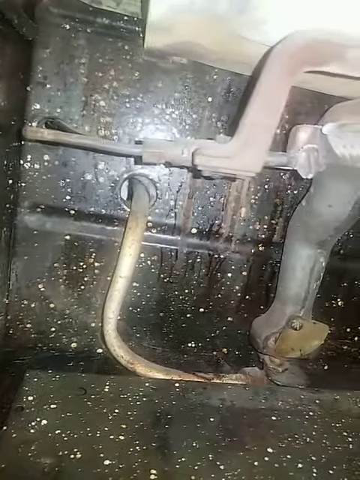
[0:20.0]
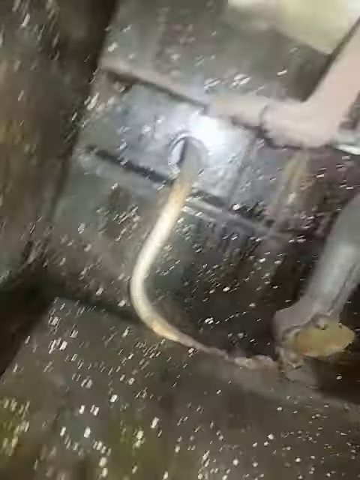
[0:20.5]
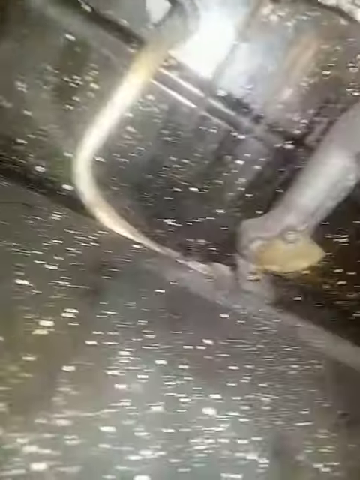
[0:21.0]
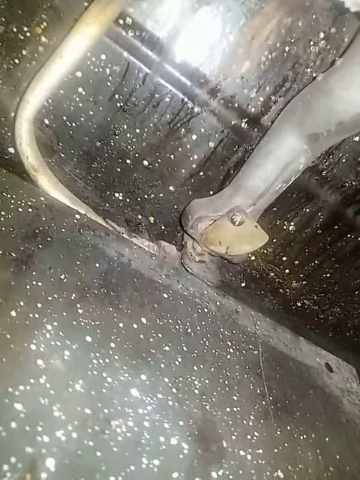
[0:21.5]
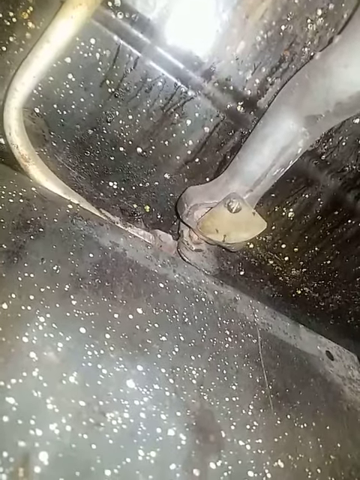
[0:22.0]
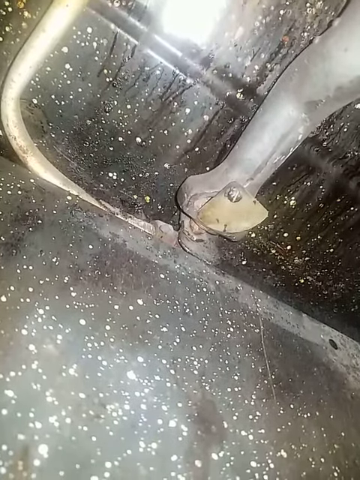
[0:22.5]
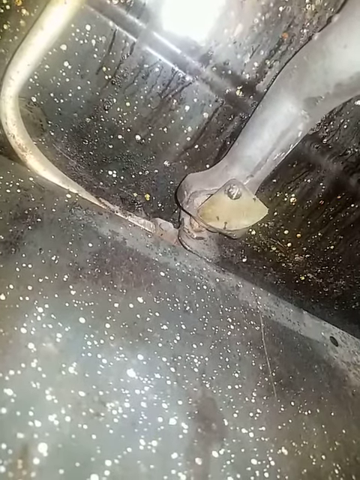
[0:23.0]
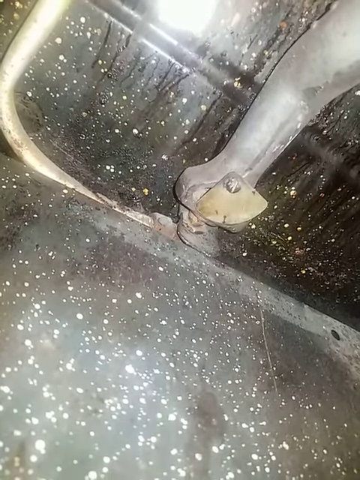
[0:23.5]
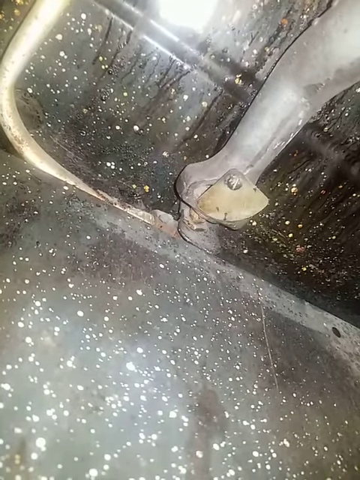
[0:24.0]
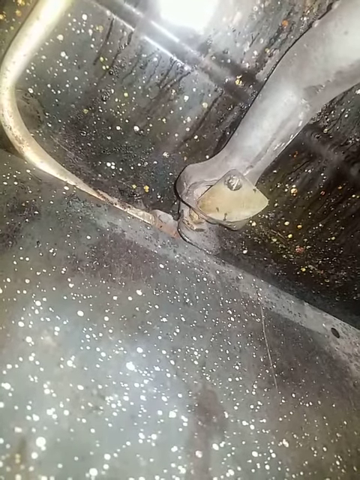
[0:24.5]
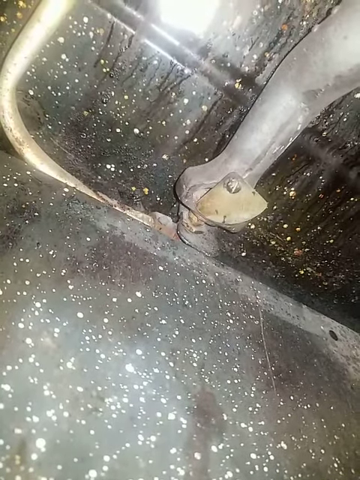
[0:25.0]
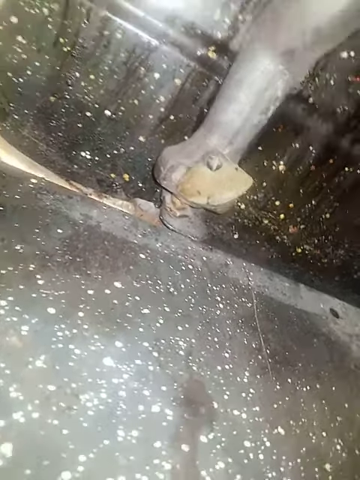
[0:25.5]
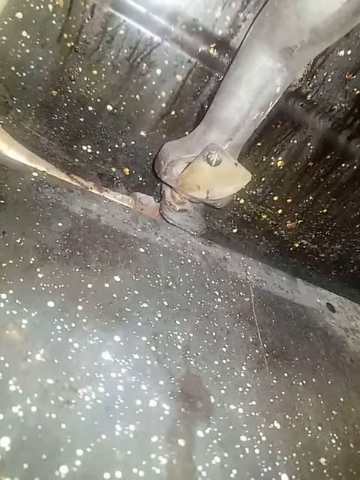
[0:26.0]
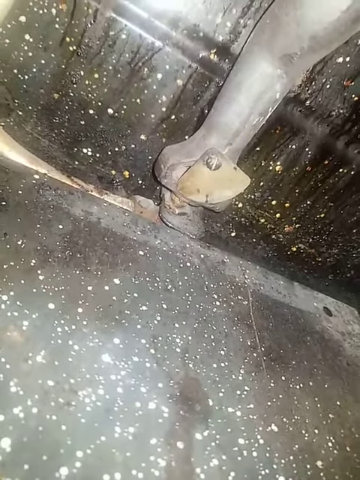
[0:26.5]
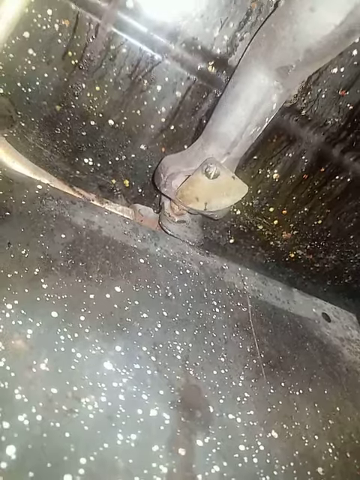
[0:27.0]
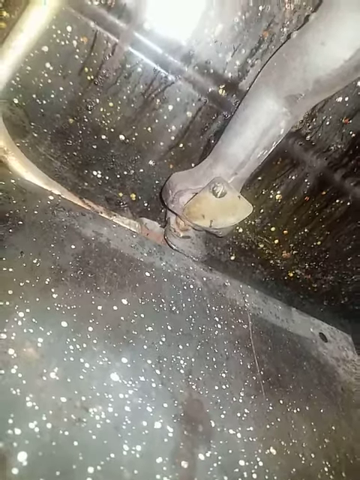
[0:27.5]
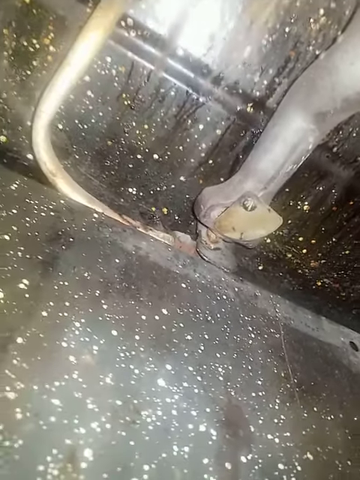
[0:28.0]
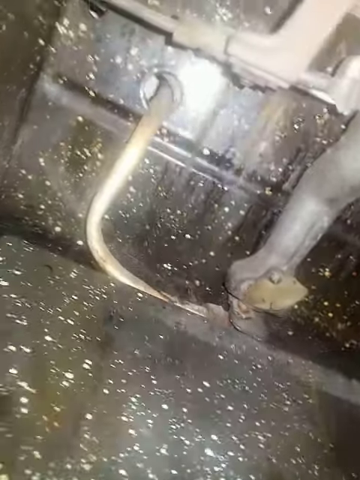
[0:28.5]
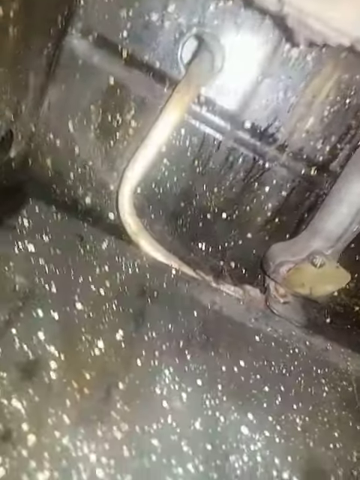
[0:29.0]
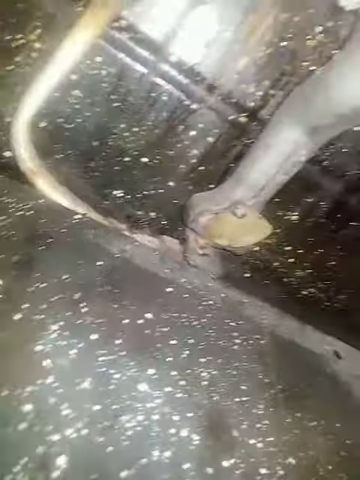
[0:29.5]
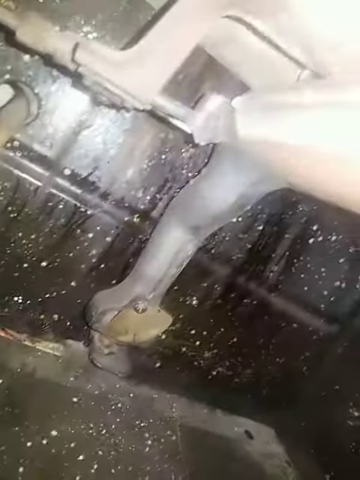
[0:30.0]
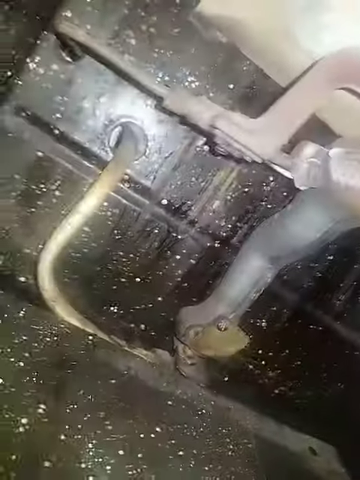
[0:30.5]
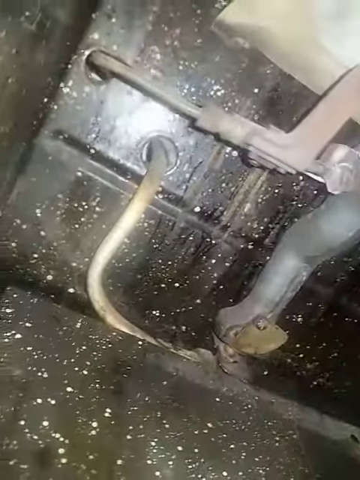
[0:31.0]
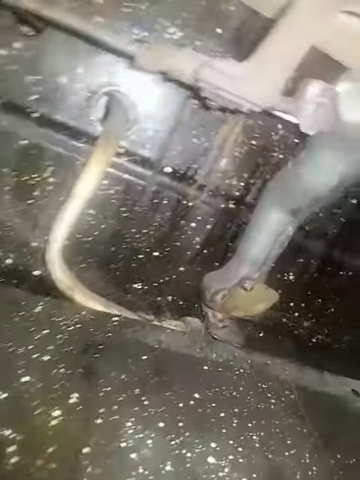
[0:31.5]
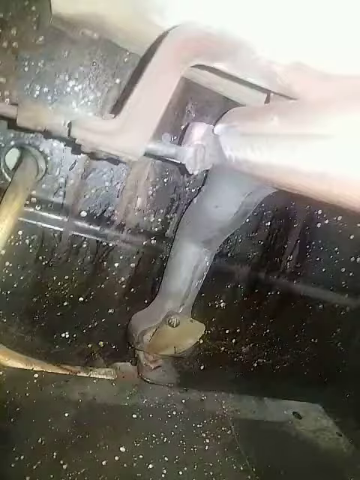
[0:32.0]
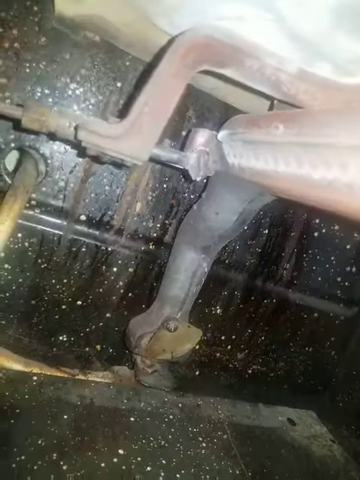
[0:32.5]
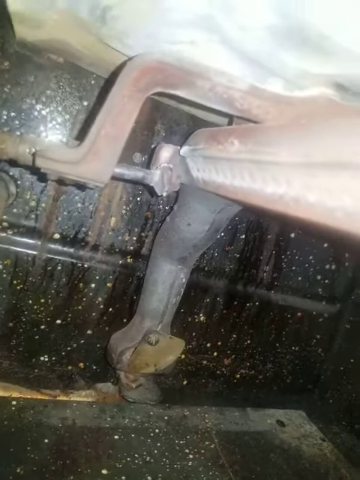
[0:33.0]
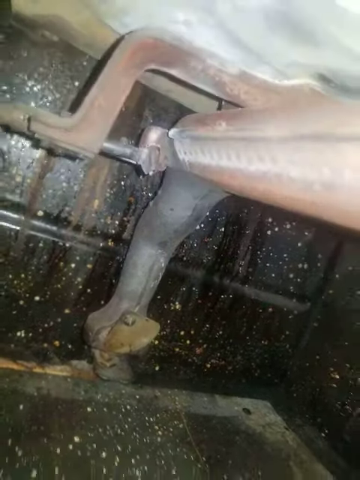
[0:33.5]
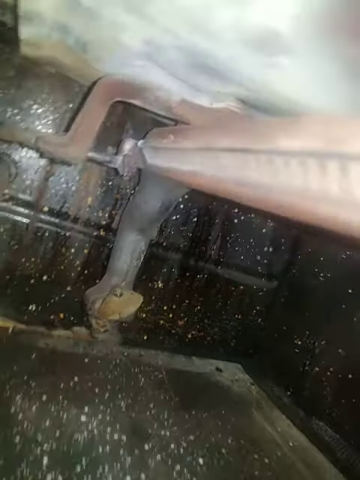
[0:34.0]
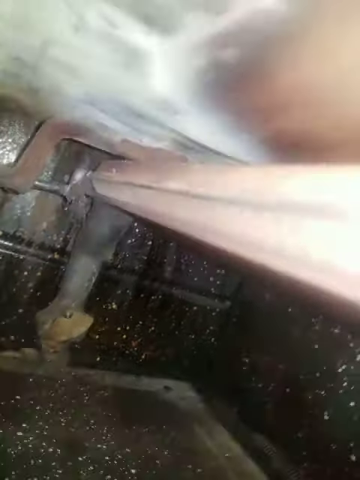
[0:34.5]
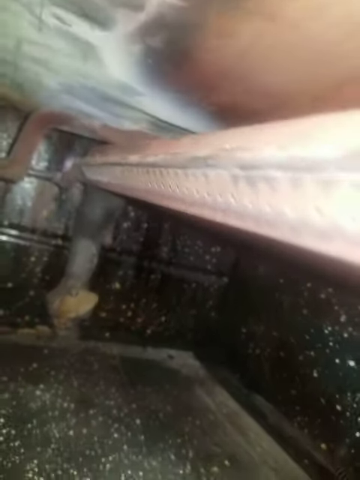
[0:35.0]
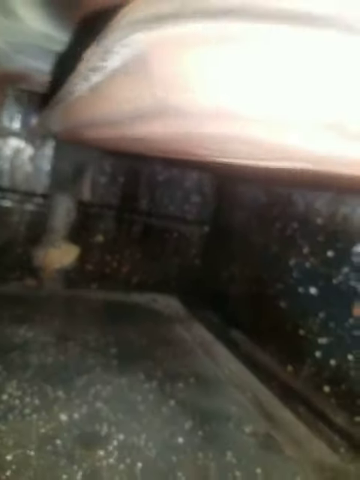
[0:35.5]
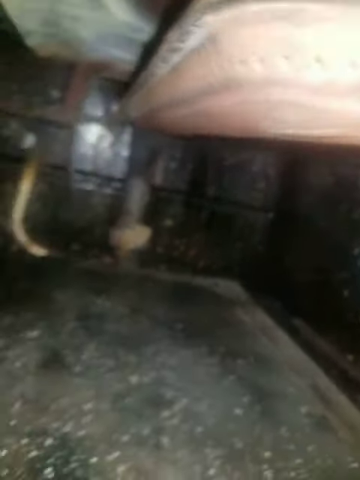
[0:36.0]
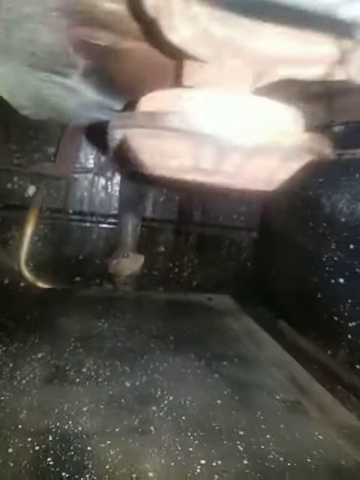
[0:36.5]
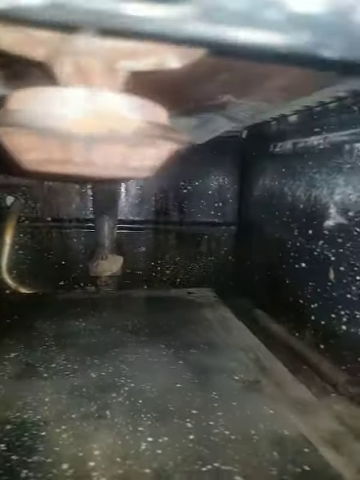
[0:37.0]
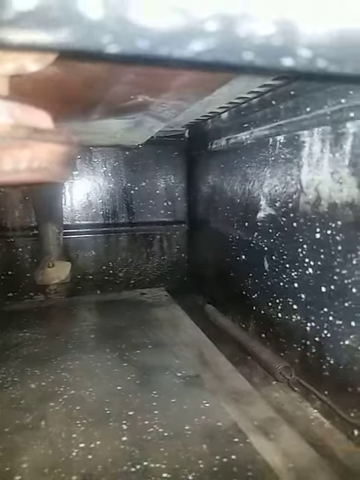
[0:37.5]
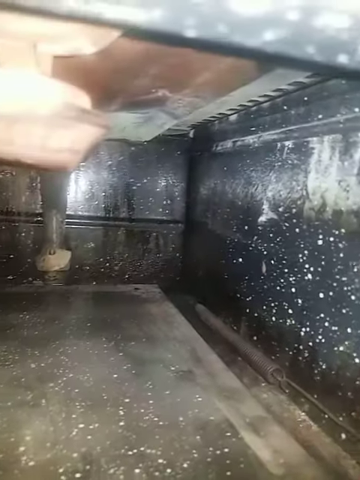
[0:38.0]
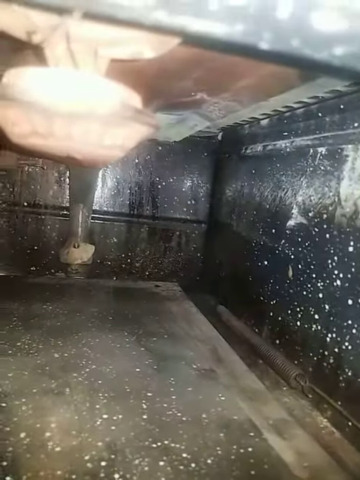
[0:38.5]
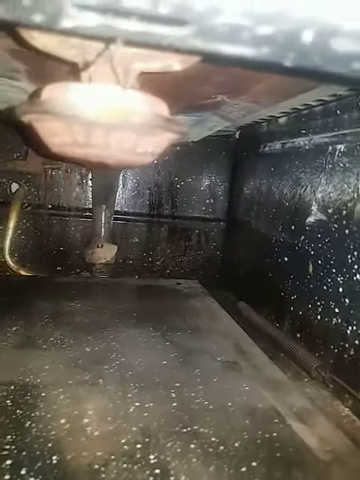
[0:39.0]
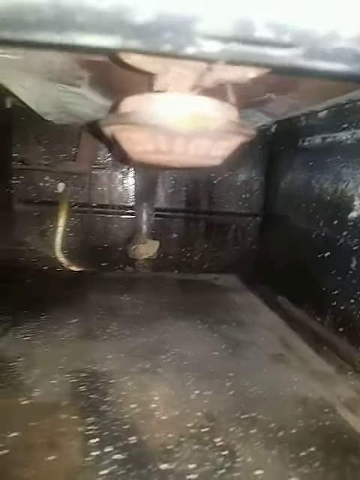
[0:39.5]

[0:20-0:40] The camera focuses on a specific part inside the oven-like or stove-like device. This piece has a screw on it, and a tube or pipe goes into a hole in one of the black walls painted all over with white dots. The camera then pans out and zooms out, showing the rusty, orange-looking parts of the device. The camera makes a shaky movement, so it looks to be handheld. The lighting is good and everything is clearly visible; the closer the view, the dirtier it gets, with what look like yellow stains.